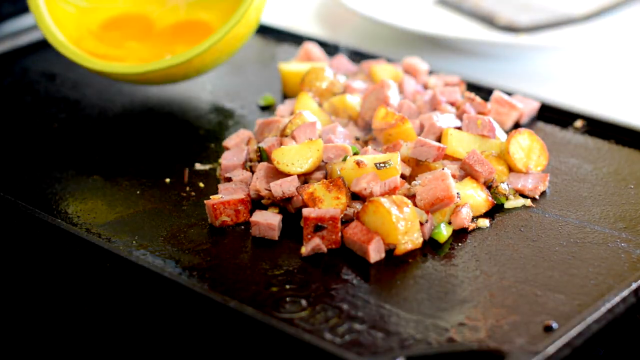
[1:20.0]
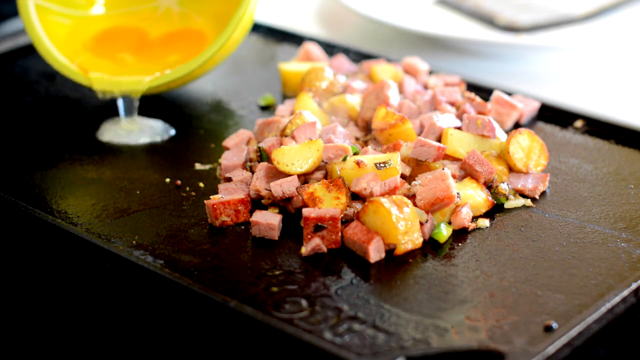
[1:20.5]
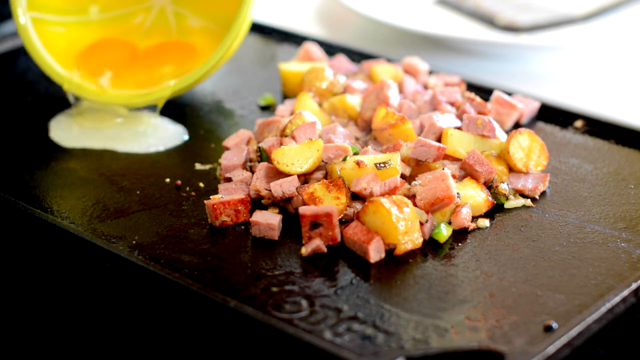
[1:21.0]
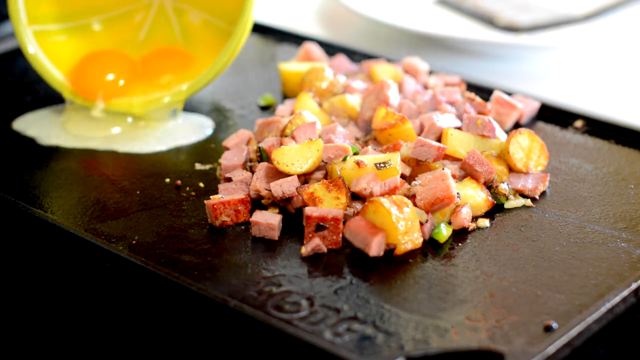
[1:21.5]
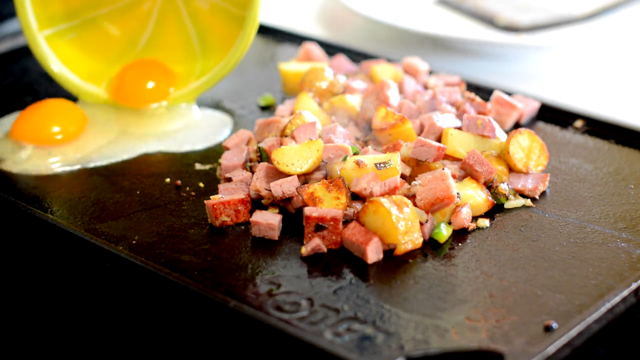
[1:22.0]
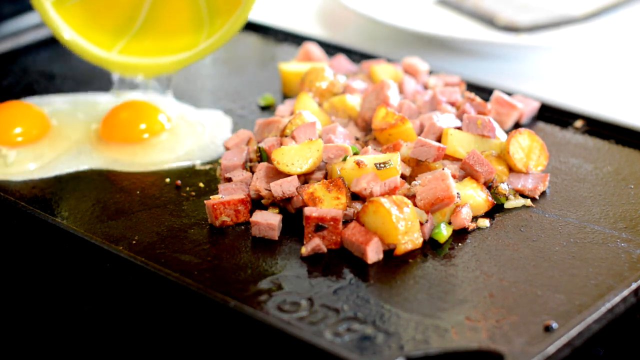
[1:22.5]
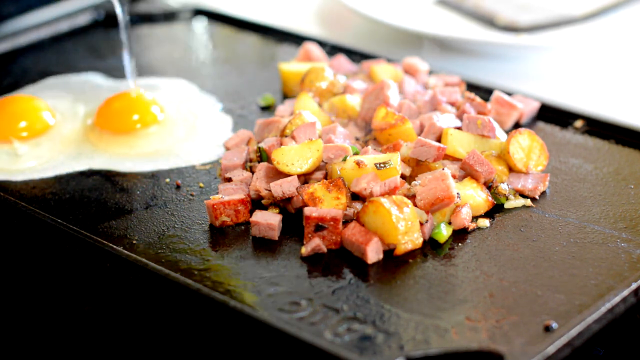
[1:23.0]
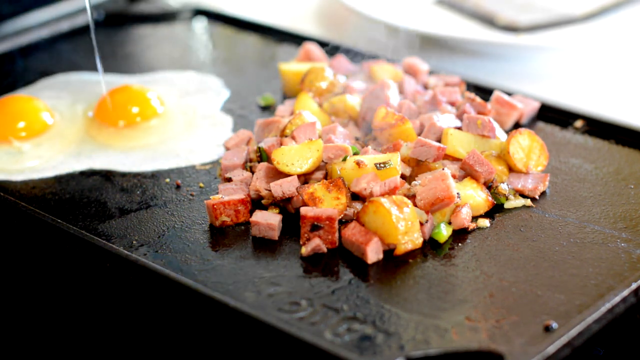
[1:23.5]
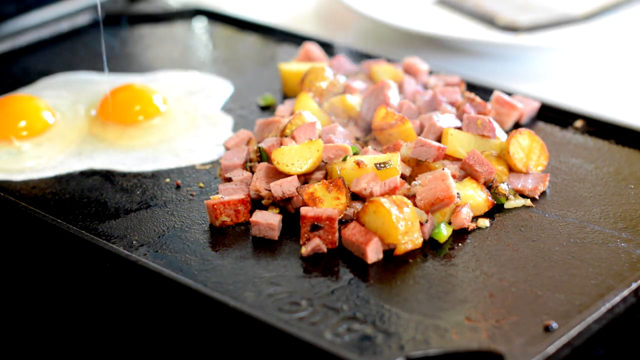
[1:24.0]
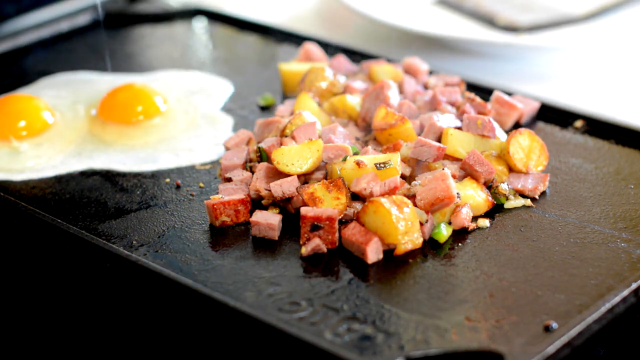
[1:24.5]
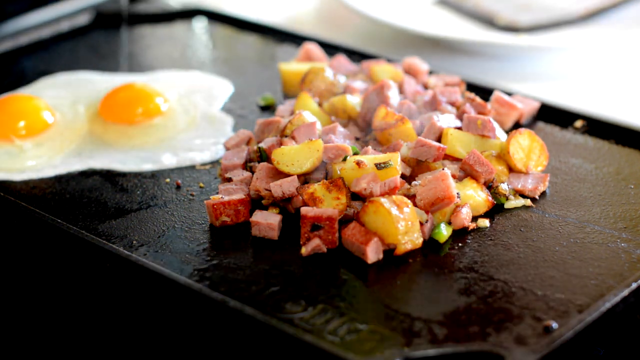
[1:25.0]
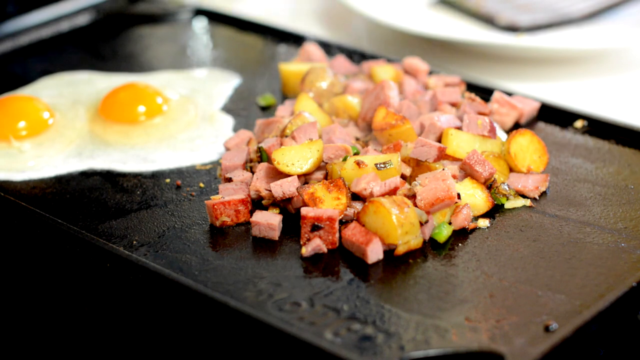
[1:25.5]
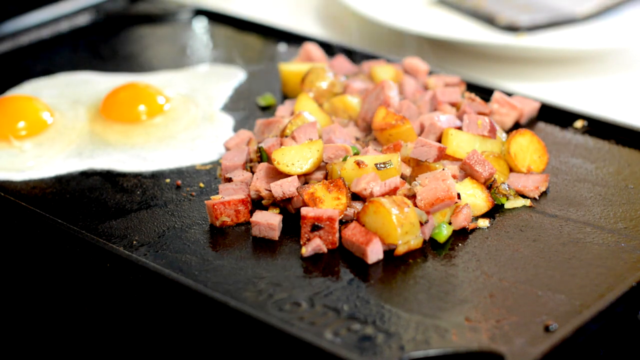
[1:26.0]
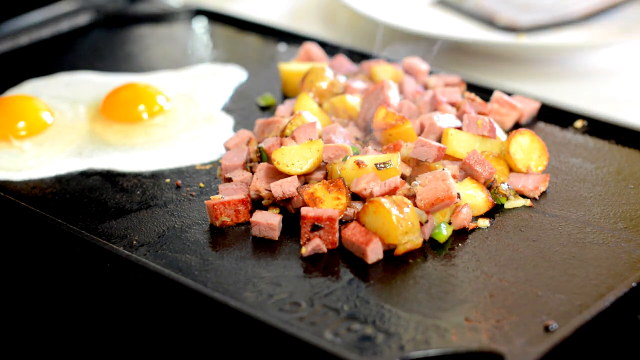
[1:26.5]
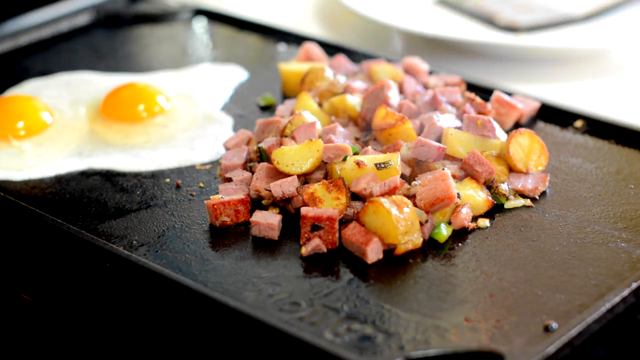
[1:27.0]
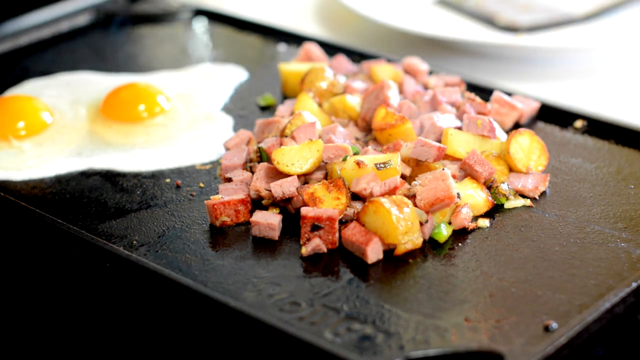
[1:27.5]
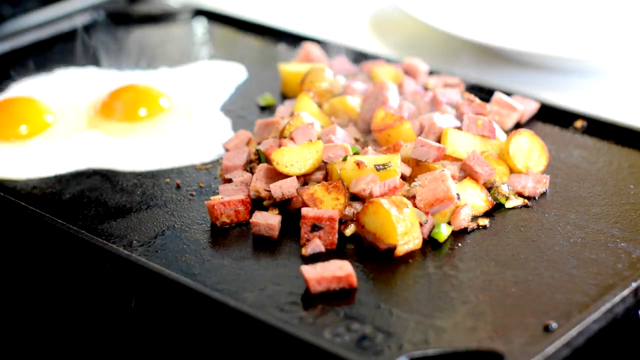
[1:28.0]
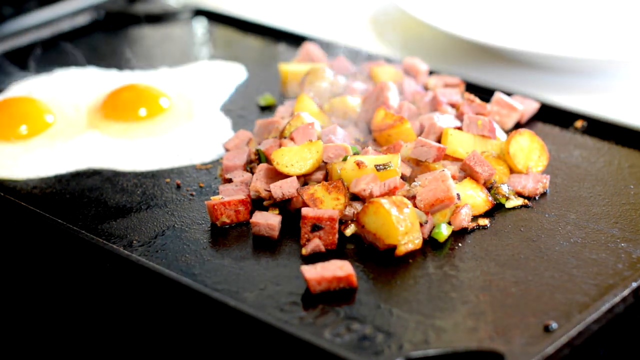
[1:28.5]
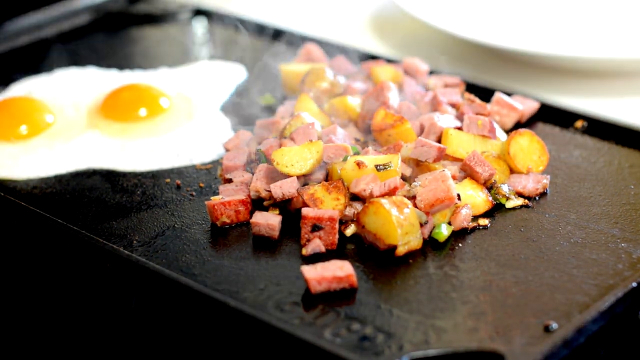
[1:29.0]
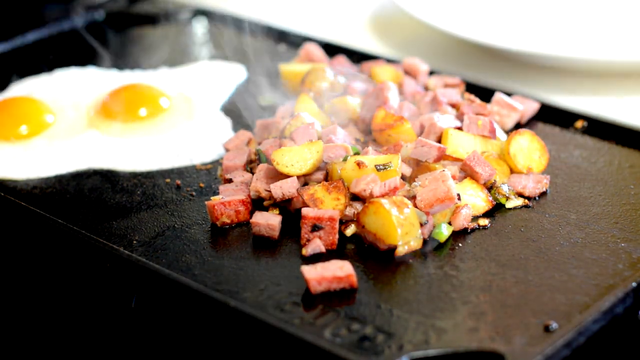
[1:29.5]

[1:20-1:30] Ham, potatoes and small cut-up vegetables are cooking in the center of a black cooking grill, like a flat iron grill. Some kind of bowl, a yellow bowl, on the left side of the image pours eggs onto the grill, dumping two eggs, which begin to fry on the left side of the grill, on the other side of the meat, as the meat and potatoes cook in the center. The time skips ahead to show the eggs cooked a little more, and the view stays there for a bit.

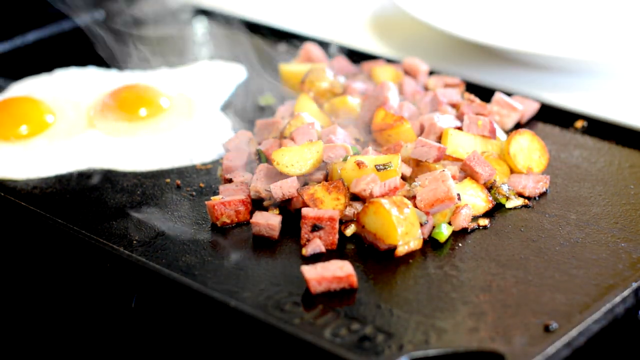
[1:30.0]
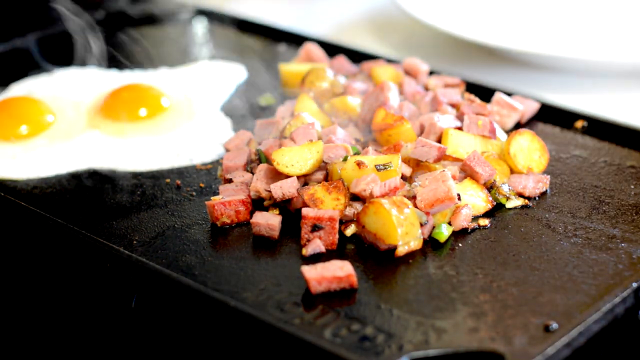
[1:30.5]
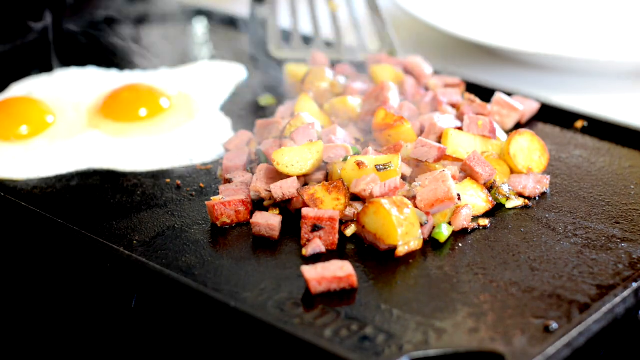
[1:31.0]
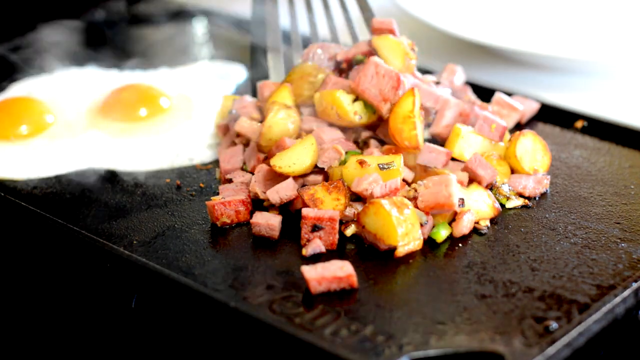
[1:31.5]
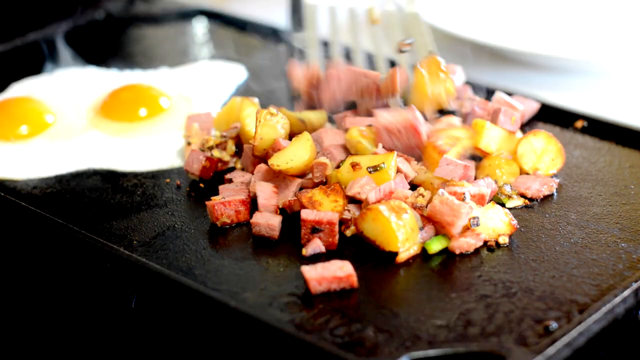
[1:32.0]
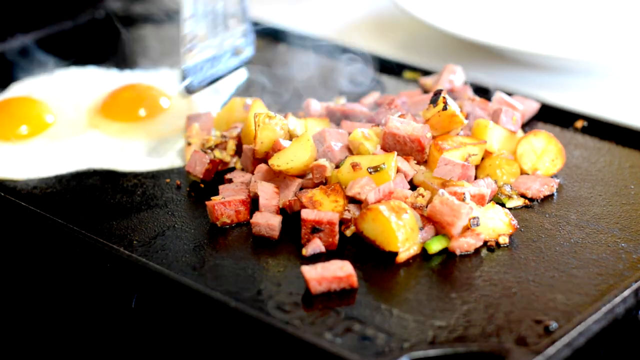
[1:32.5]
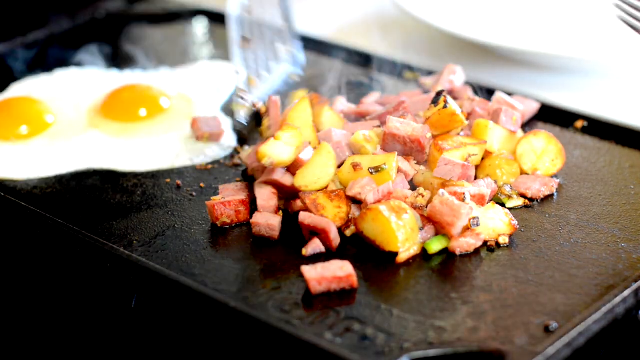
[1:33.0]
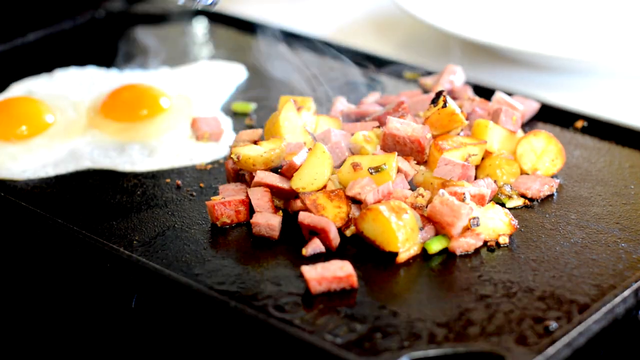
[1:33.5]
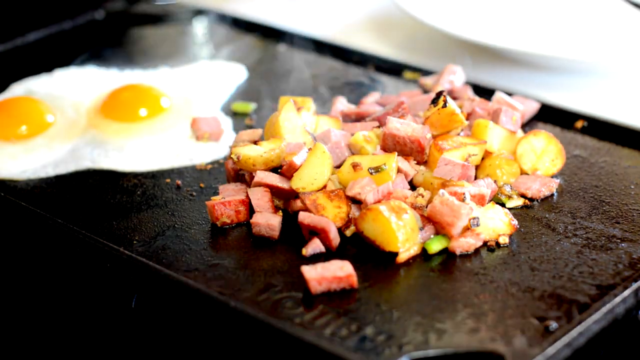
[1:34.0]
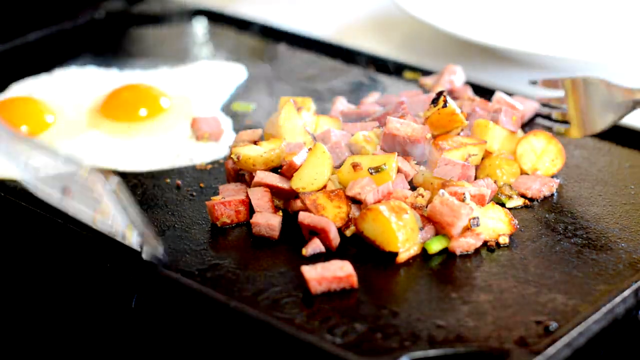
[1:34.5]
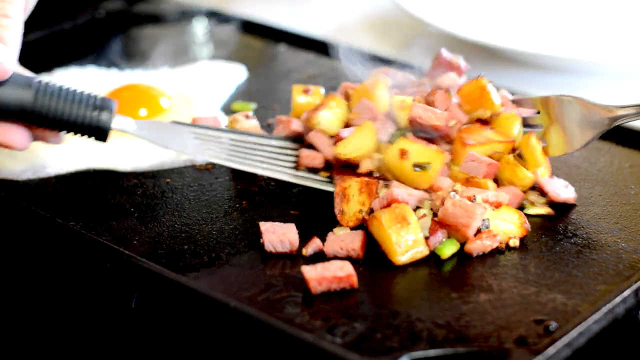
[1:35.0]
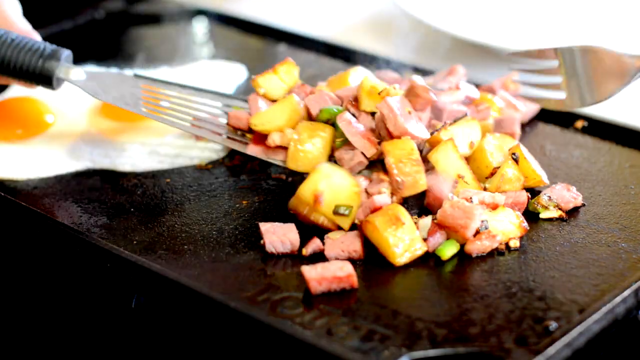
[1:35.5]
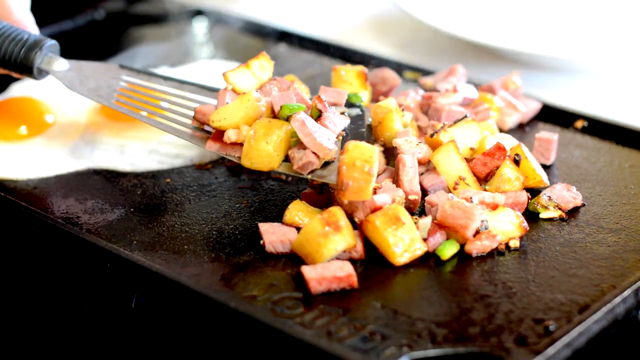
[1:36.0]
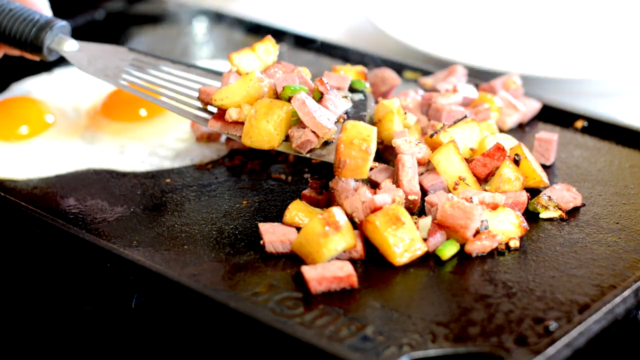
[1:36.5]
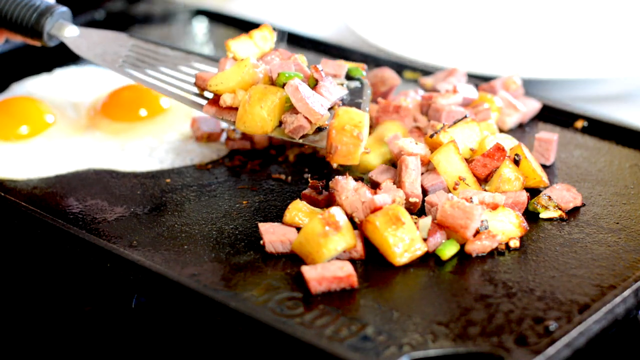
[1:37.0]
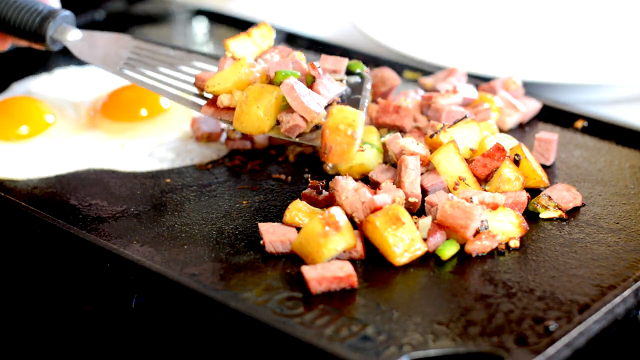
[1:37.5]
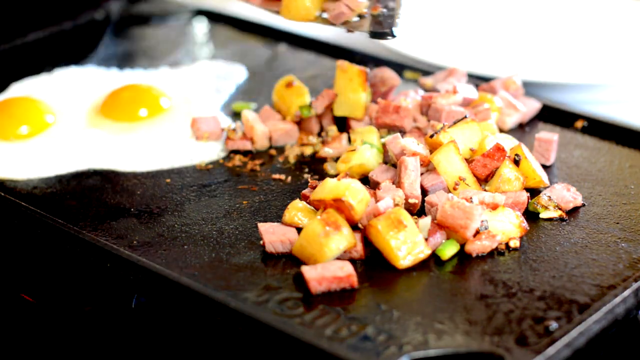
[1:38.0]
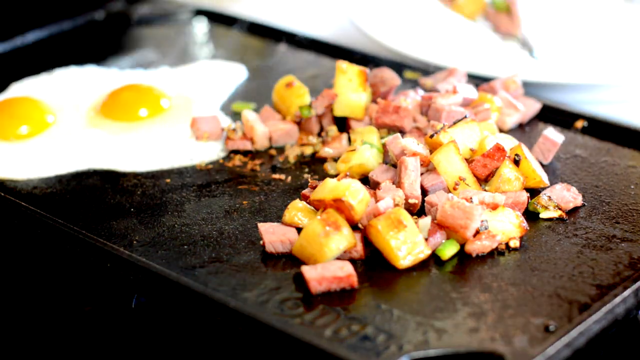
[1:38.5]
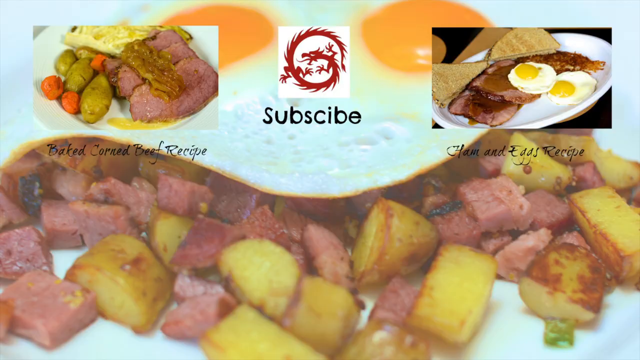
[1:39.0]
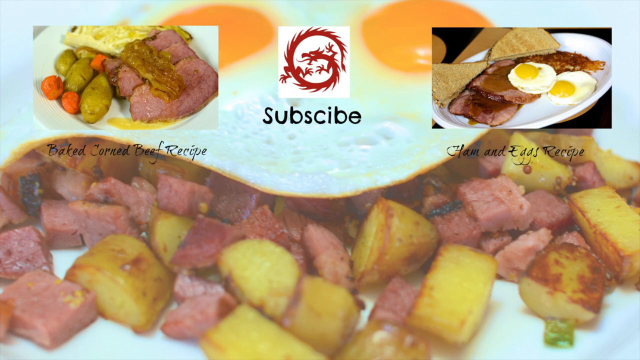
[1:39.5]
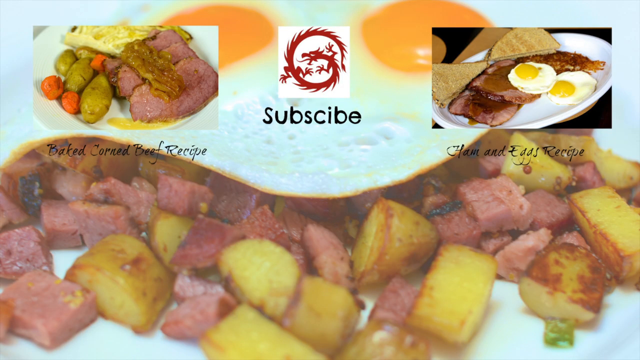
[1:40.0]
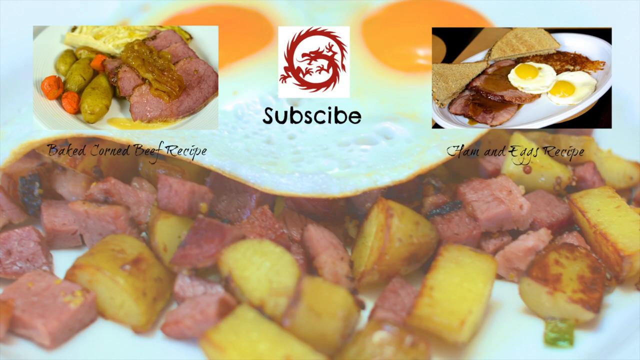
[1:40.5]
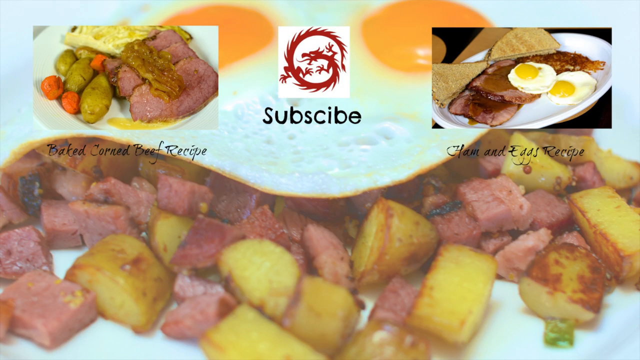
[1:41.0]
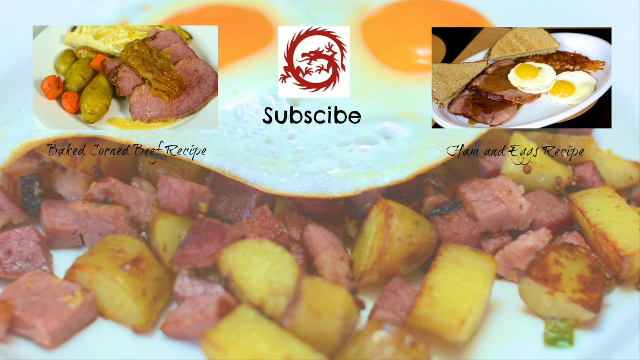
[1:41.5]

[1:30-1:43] A black flat iron grill is cooking meat and potatoes in the center and frying two eggs on the left side. Smoke comes up from the eggs and from the meat and potatoes, and more and more smoke comes off the meat and potatoes as they cook. A silver spatula with black outlining along the bottom, like a black border, appears and pushes some of the potatoes and meat away from the eggs. A fork then appears on the right side of the screen while the spatula comes in from the left, where fingers are holding the spatula's handle. The fork pushes meat and potatoes onto the spatula, which lifts them up and puts them onto a white plate. The scene then changes to a still image of what looks like the hash meat and potatoes with the eggs on top. A little square in the upper left corner and a square in the upper right corner show food dishes, including potatoes and meat and some eggs and toast. In the center is a square with a little dragon logo inside it, with "subscribe" underneath. Underneath the two images, the right one says "ham and eggs recipe" and the left one says "baked corned beef recipe".